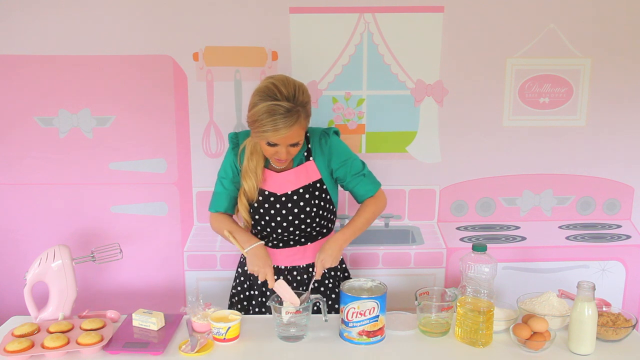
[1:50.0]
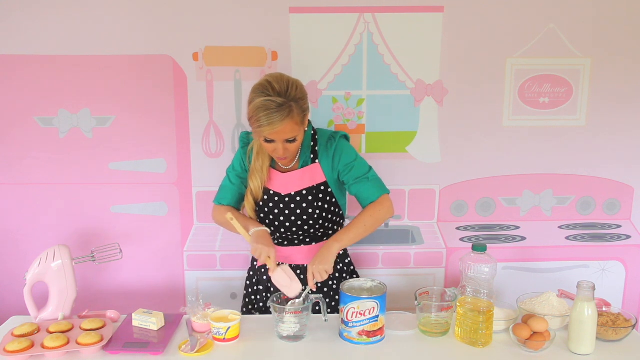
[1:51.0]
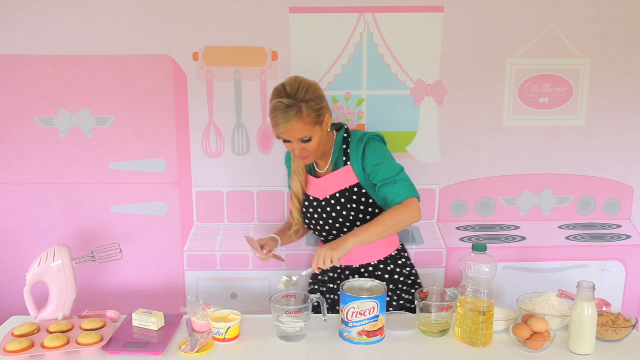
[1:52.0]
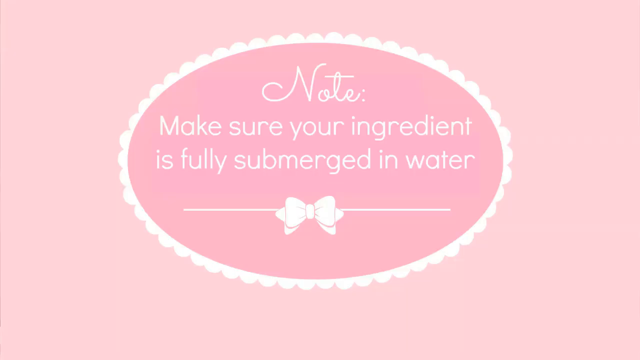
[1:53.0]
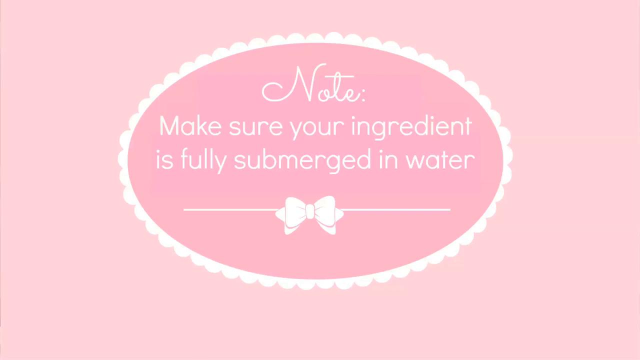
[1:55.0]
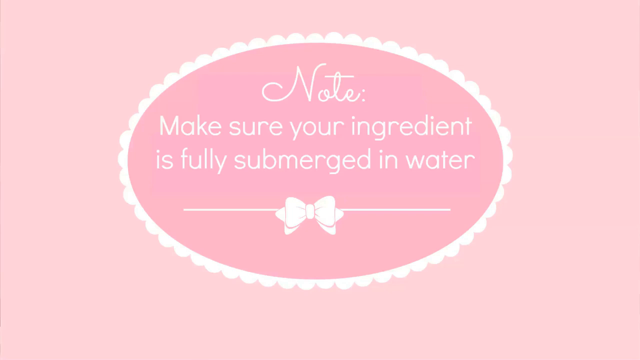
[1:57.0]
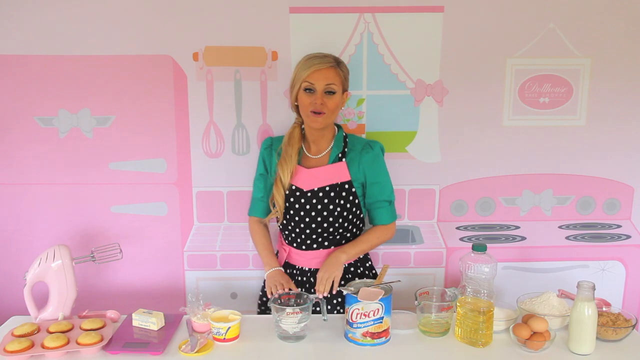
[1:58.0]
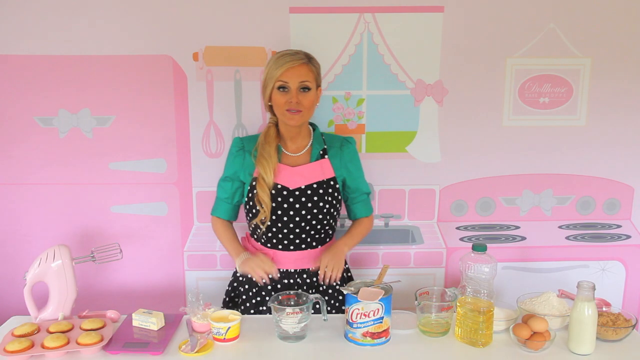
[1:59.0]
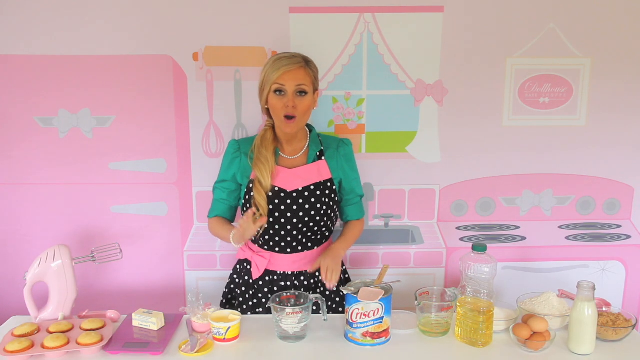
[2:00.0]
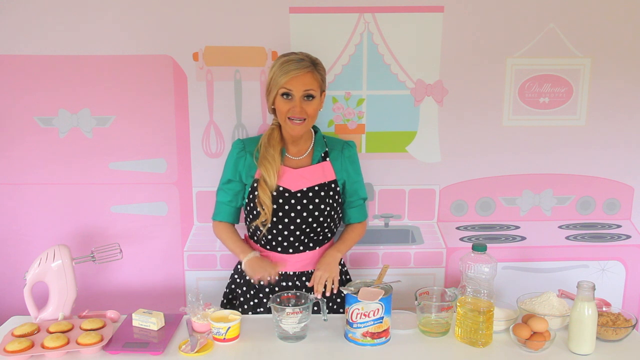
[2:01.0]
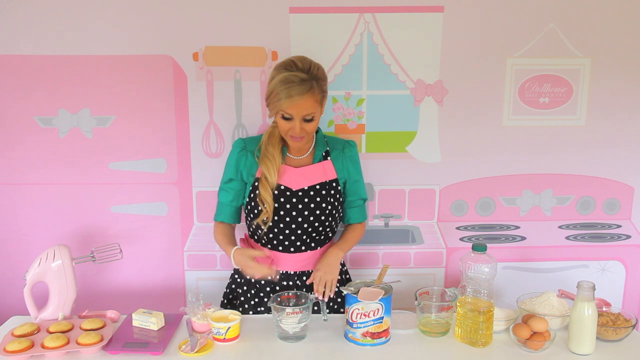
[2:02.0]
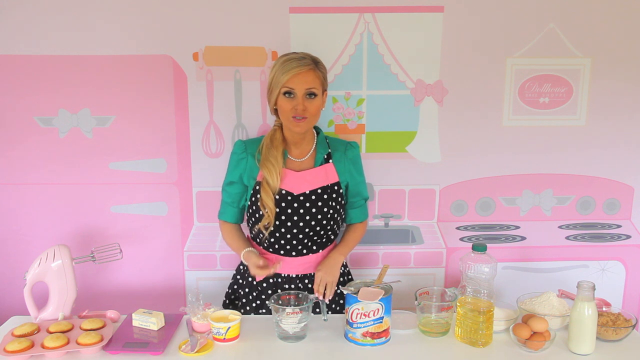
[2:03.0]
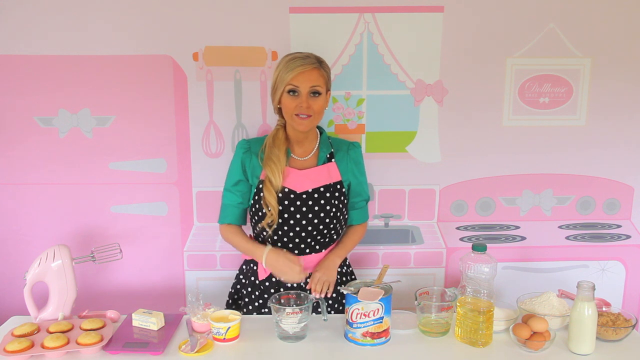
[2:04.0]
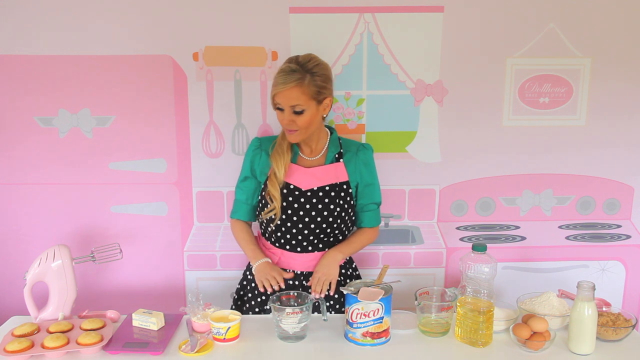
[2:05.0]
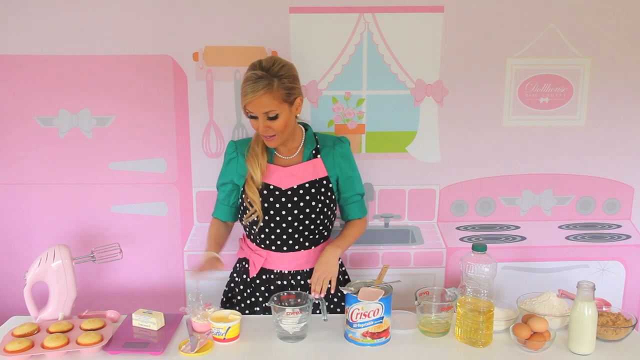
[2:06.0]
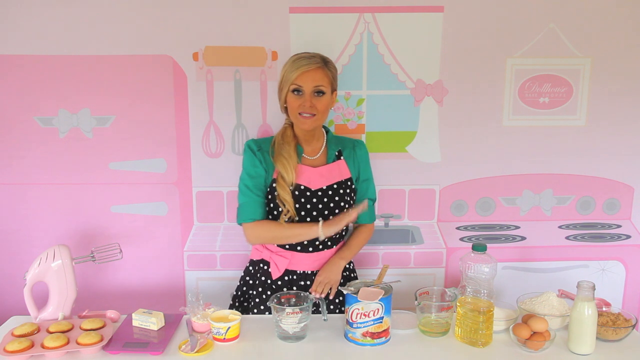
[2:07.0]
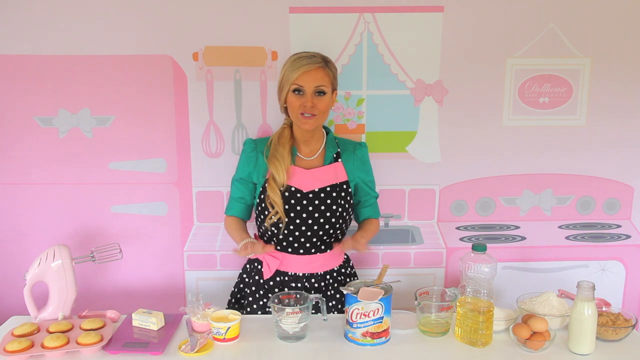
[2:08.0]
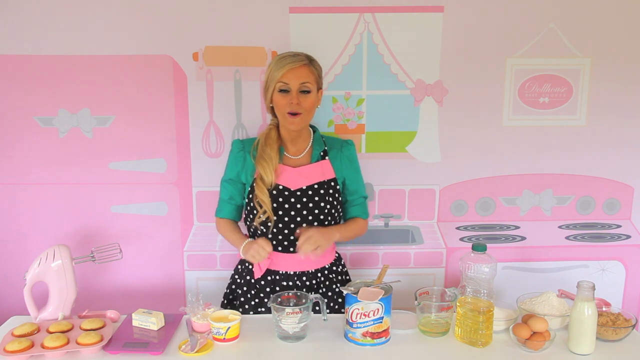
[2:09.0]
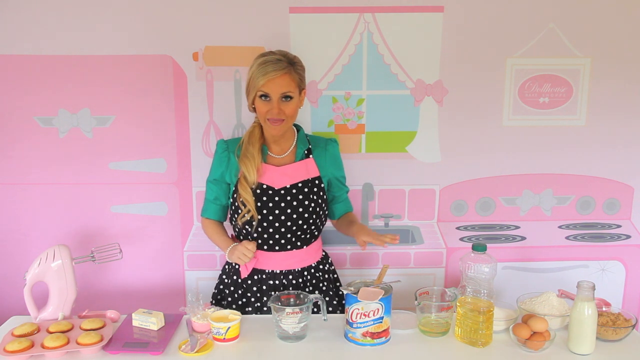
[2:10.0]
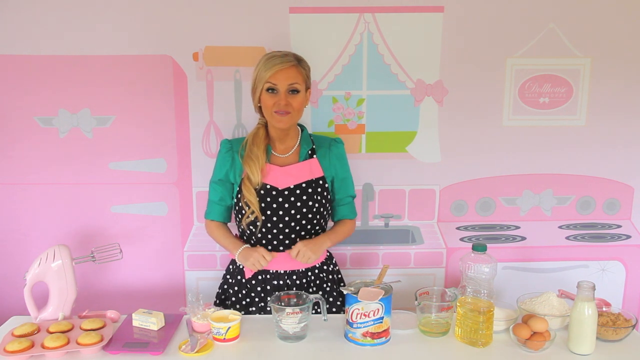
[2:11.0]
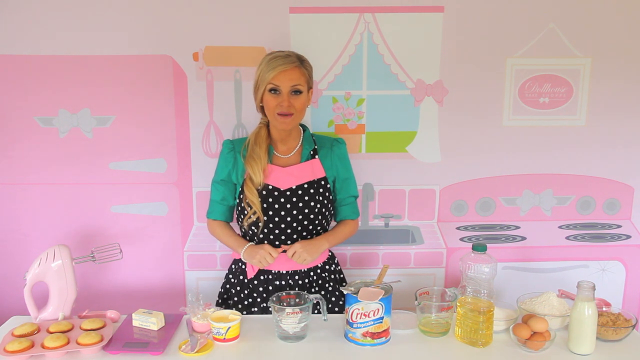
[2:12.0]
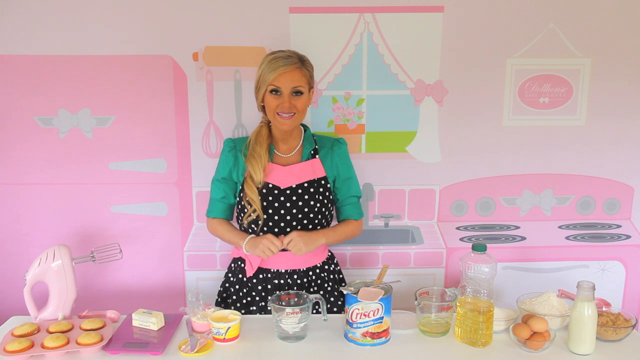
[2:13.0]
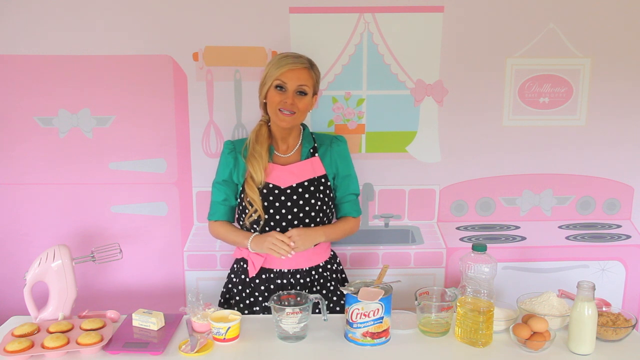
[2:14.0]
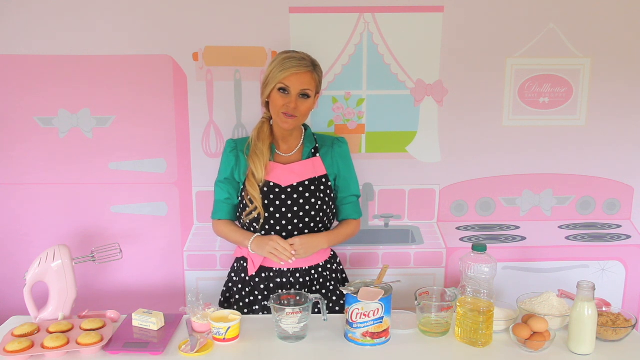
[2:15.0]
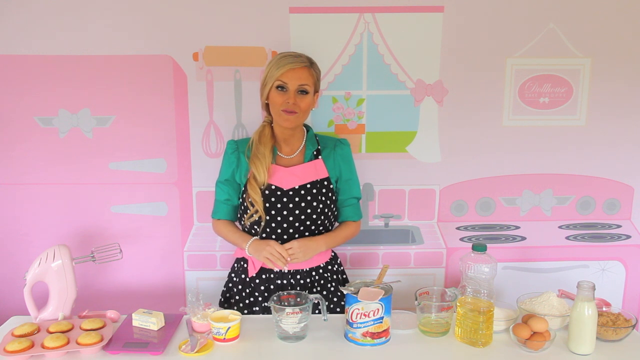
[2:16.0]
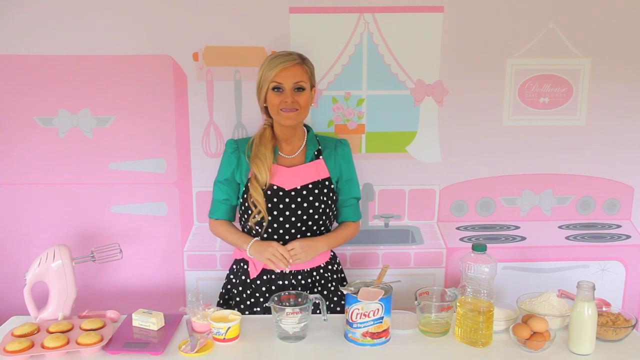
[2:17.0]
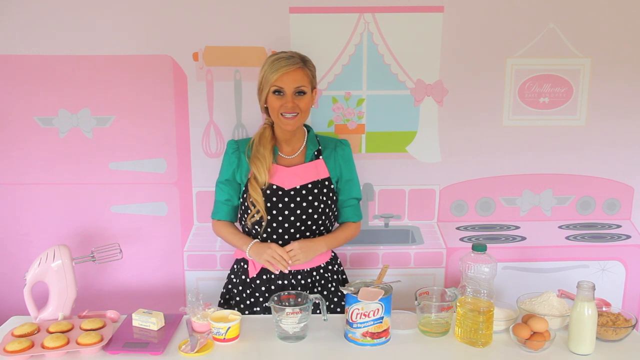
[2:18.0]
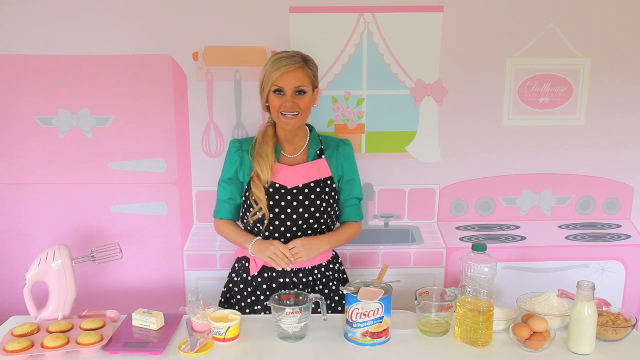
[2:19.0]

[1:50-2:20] She holds her pink spatula along with her spoon and pushes the white product down into the jug of liquid. The video then cuts to a pink page with a white oval outline, inside which white text reads "Make sure your ingredient is fully submerged in water". She mixes the white cream and looks at the cream inside the water in the jug in the middle. She keeps explaining something while pointing at the jug, counts the ingredients around her, and looks at the camera with a smile as she explains.